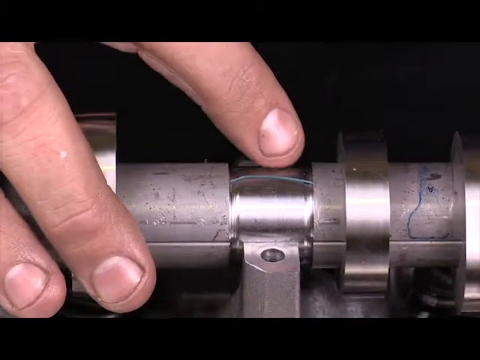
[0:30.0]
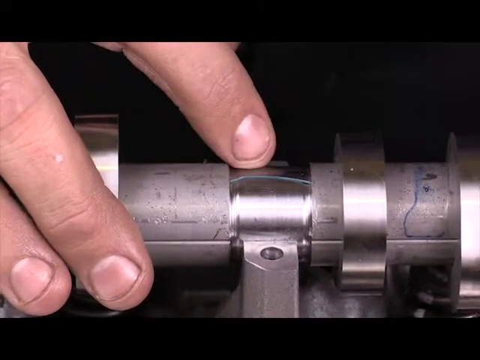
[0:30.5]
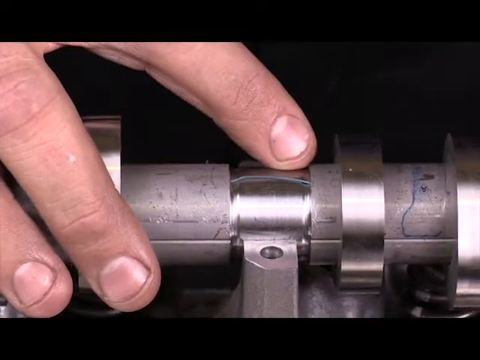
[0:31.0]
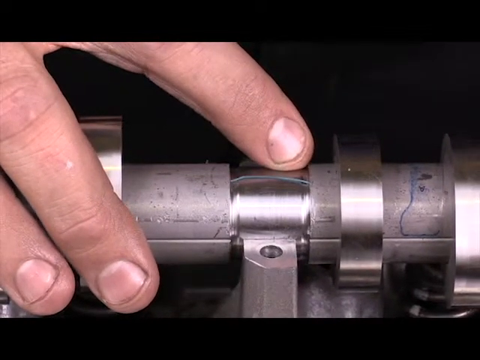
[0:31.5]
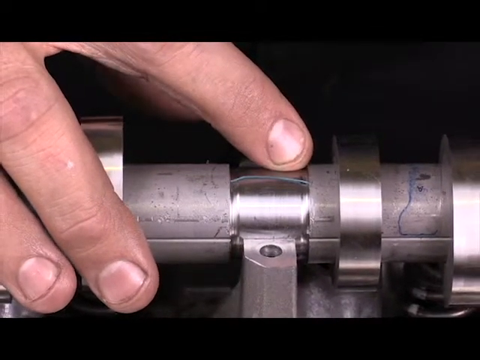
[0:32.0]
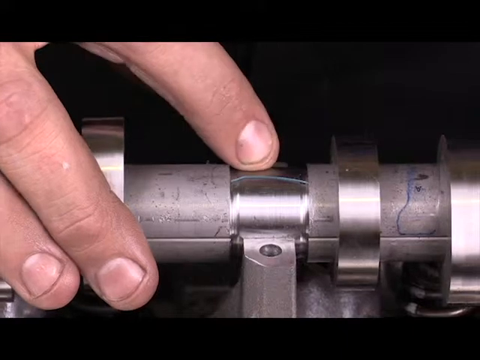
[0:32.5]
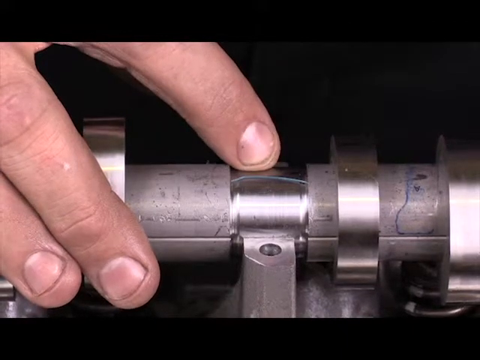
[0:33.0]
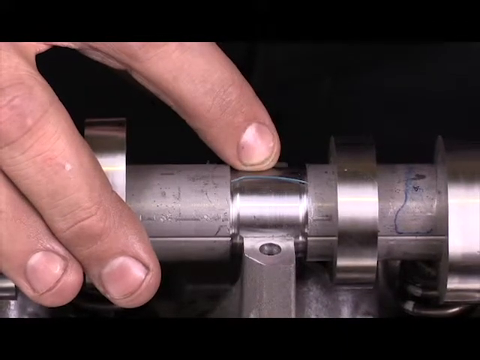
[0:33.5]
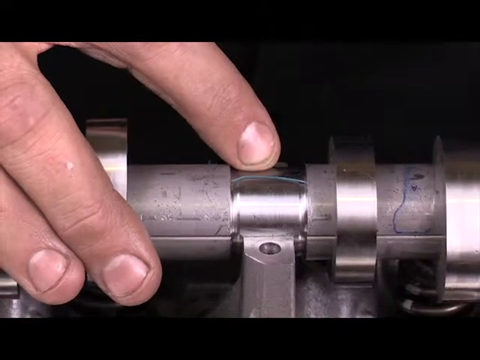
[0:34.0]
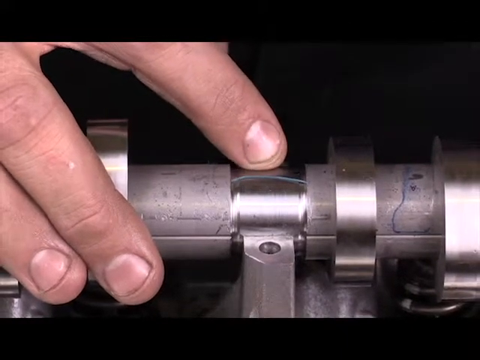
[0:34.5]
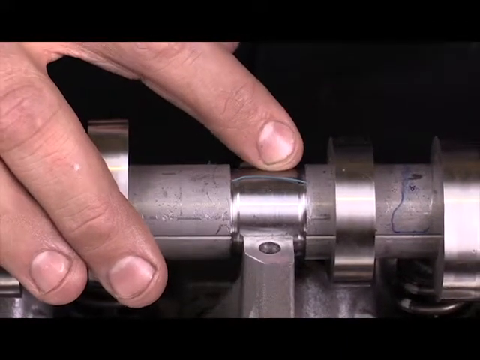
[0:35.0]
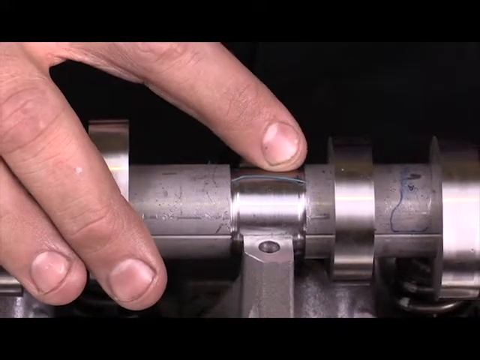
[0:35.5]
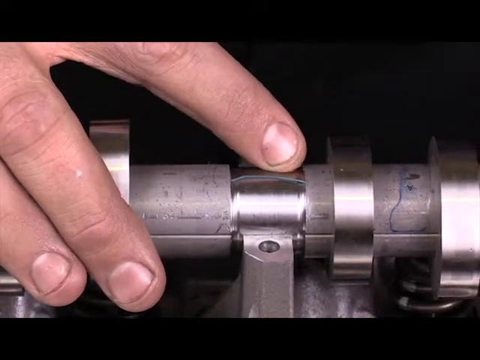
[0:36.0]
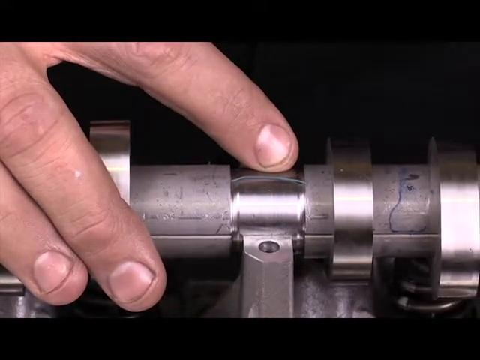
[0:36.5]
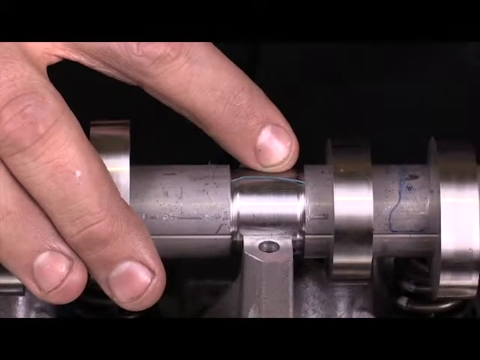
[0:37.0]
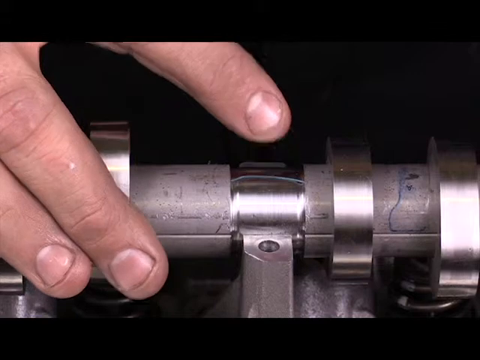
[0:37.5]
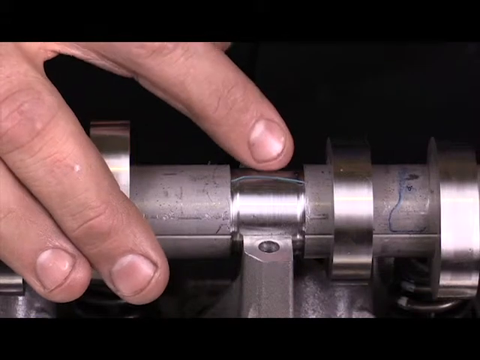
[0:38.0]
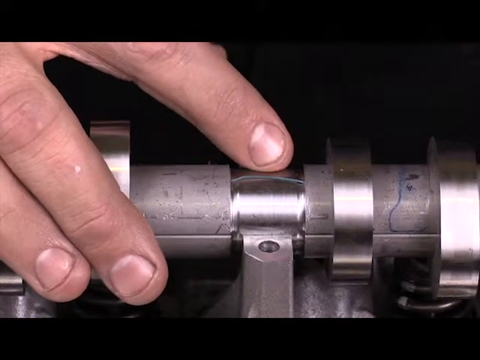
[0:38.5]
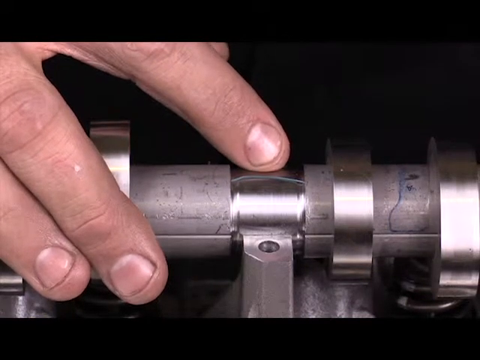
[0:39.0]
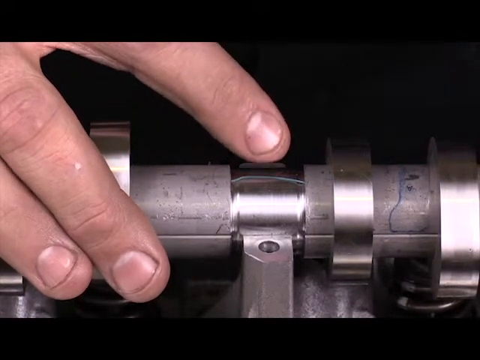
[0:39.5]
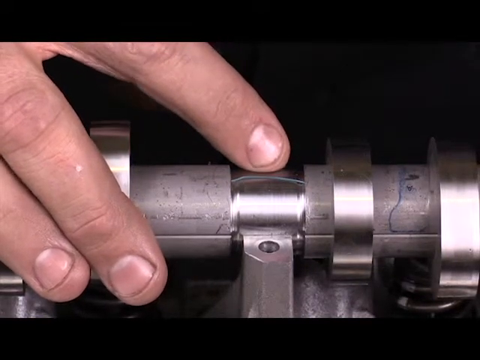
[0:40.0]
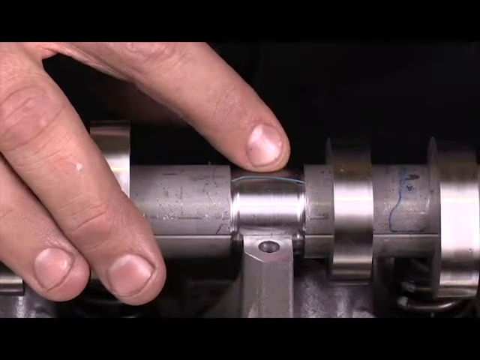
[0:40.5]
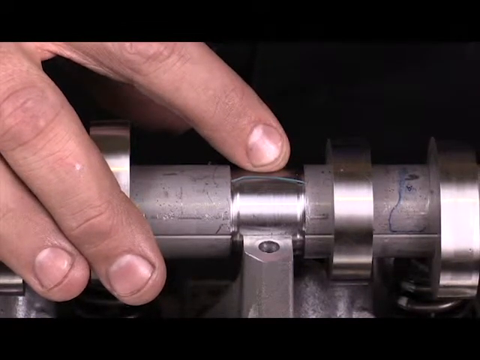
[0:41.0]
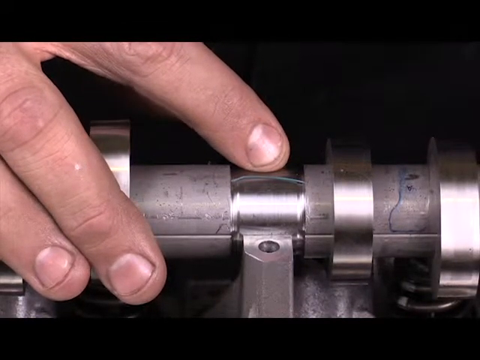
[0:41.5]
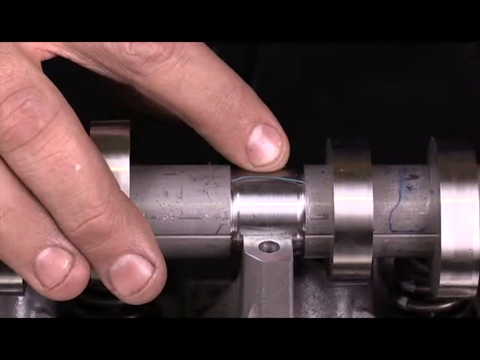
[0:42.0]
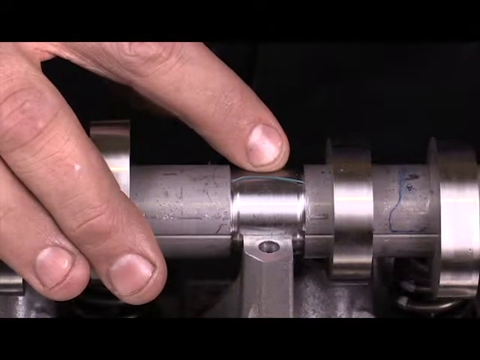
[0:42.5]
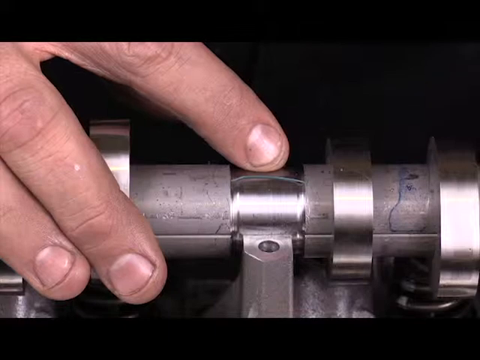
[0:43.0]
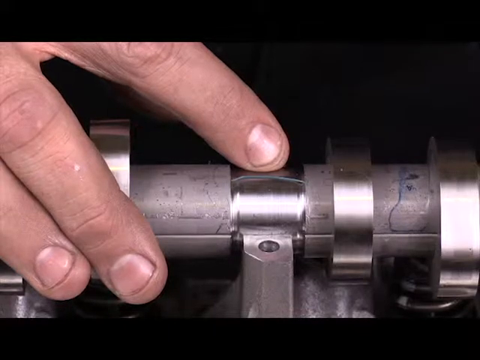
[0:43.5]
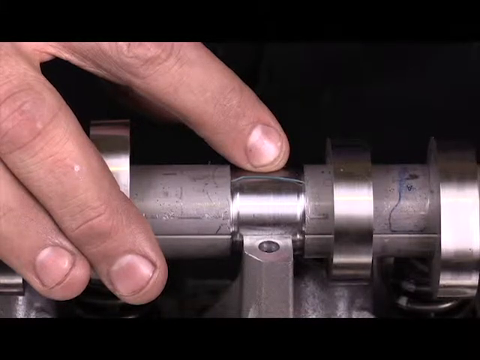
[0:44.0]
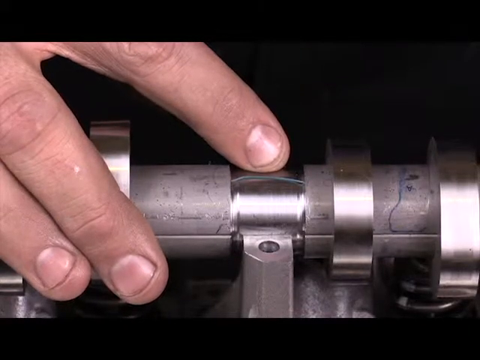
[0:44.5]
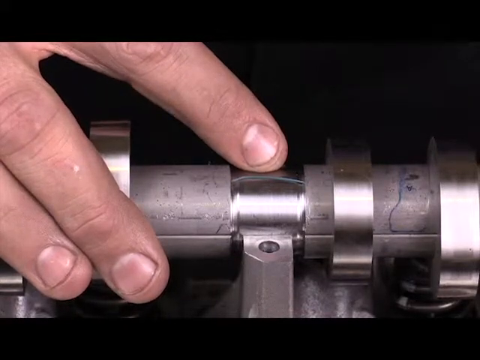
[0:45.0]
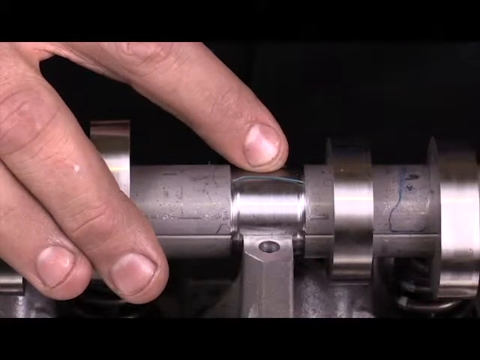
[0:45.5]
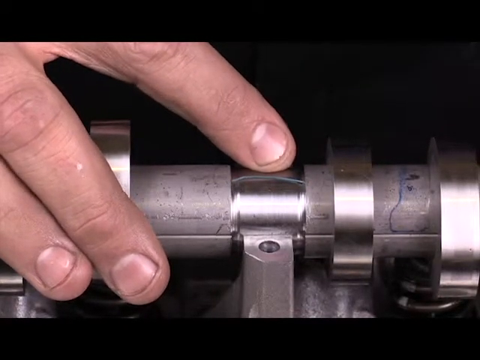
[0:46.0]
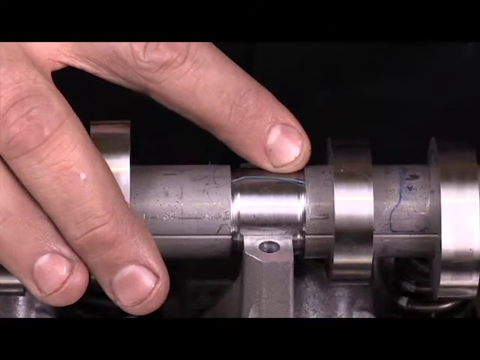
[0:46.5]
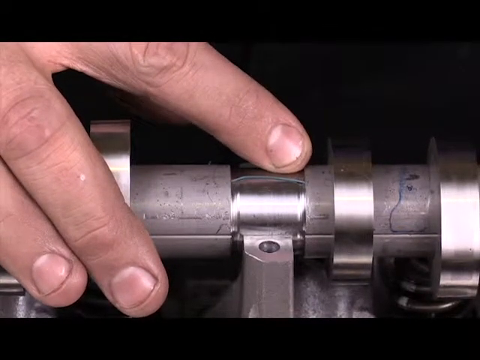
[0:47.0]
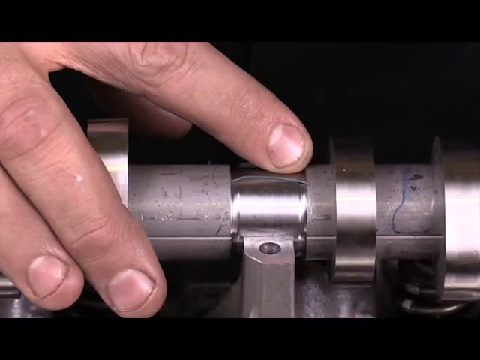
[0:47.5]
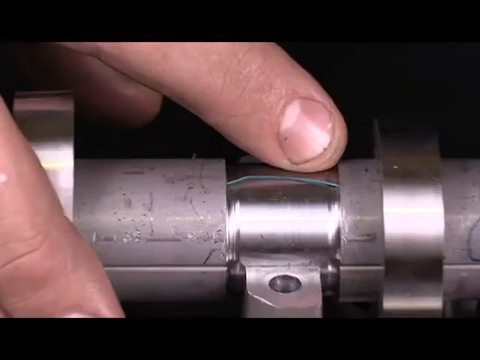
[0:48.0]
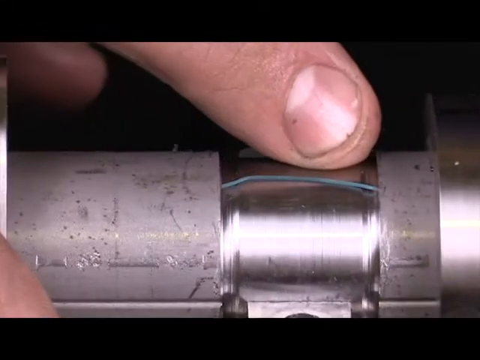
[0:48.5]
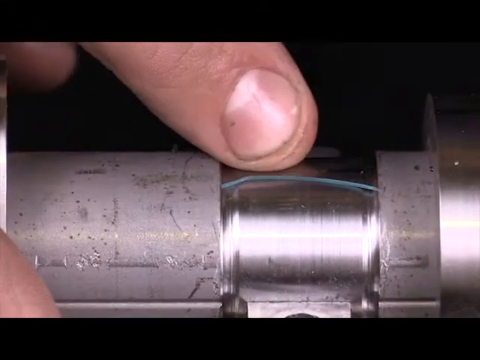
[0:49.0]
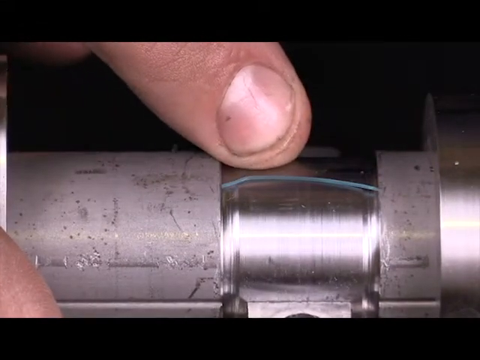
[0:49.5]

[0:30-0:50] A white, masculine hand is on a piece of metal that looks like some kind of automotive part: a metal cylinder with brackets on it, apparently where screws could go. The pointer finger points at a smooth piece of the metal on the cylinder part. The hand kind of slides left to right, horizontally, and the camera zooms in on the finger pointed at that piece of metal. The finger mostly moves back and forth, repeatedly sliding along and touching the metal. Only a glimpse of the thumb is visible behind the finger; the pointer finger, a bit of the thumb, the ring finger and the pinky finger can be seen, but not the other finger, so possibly one of the fingers is missing from view. At one point the hand lifts its little finger up and brings it back down. The nail on the finger is cut very short.